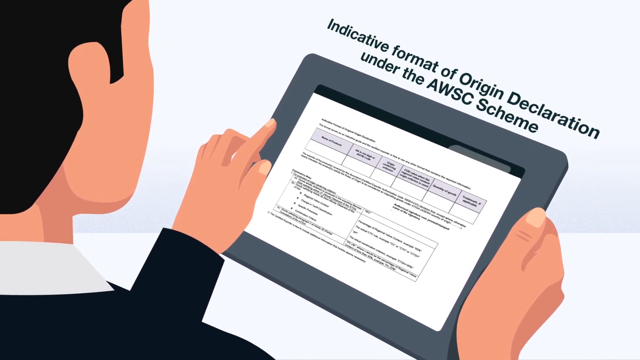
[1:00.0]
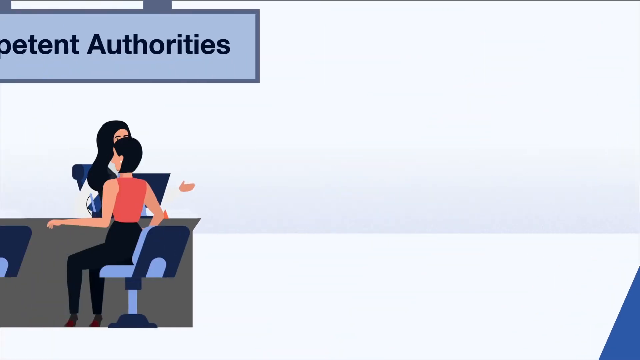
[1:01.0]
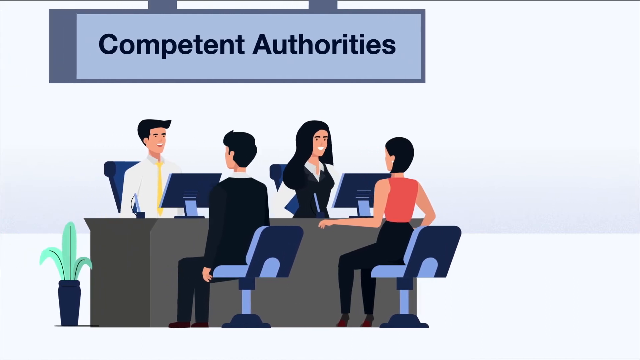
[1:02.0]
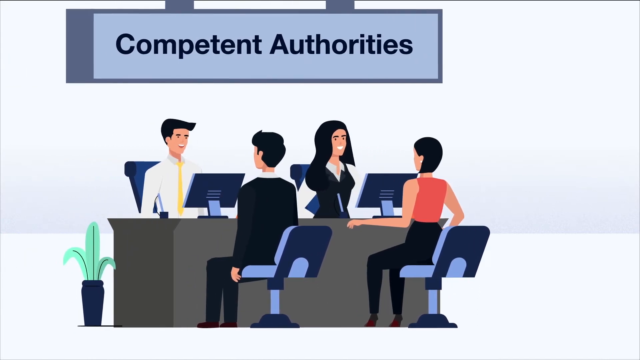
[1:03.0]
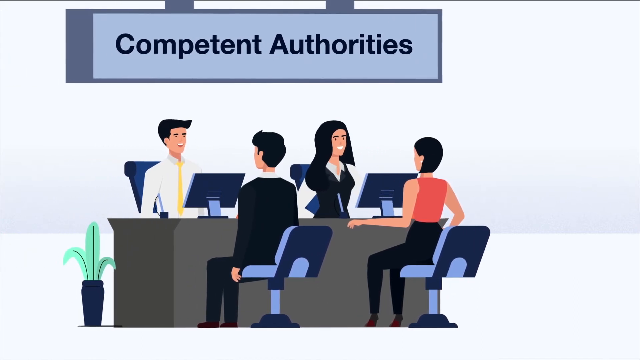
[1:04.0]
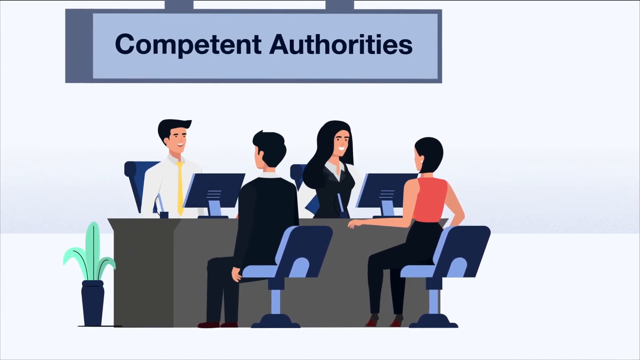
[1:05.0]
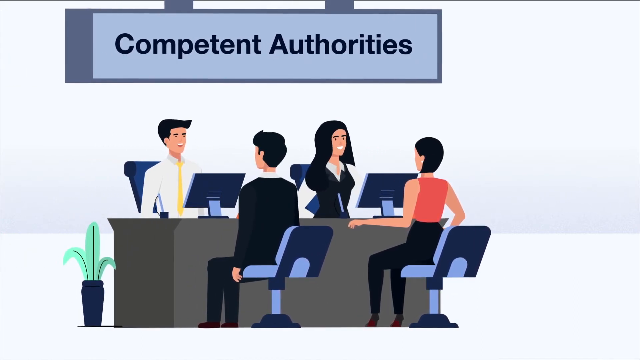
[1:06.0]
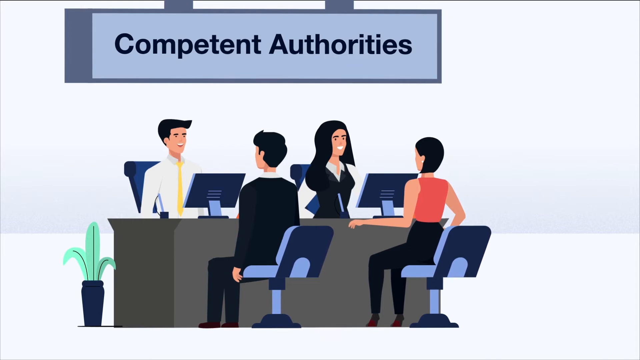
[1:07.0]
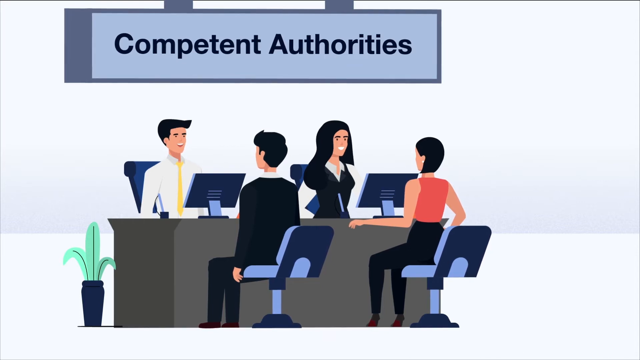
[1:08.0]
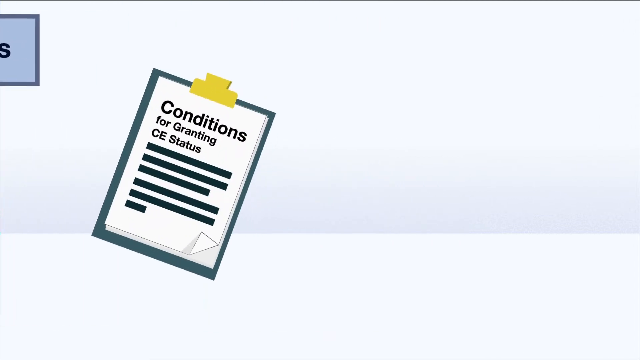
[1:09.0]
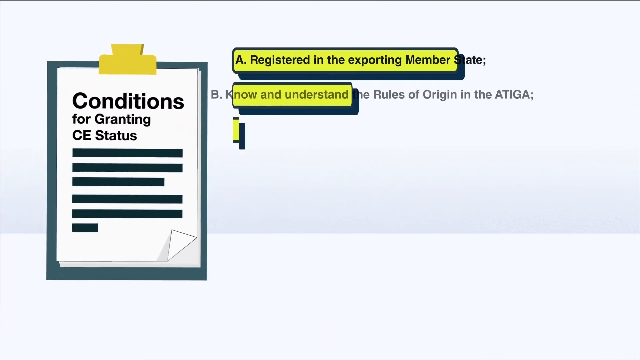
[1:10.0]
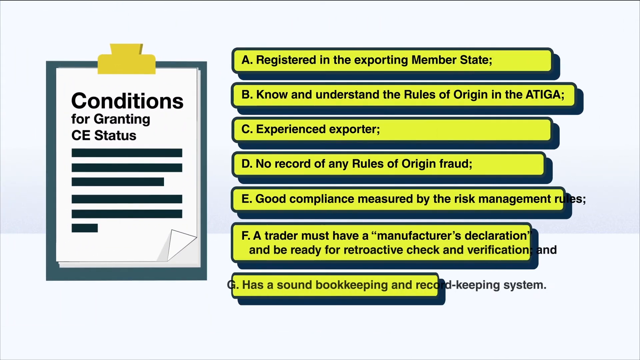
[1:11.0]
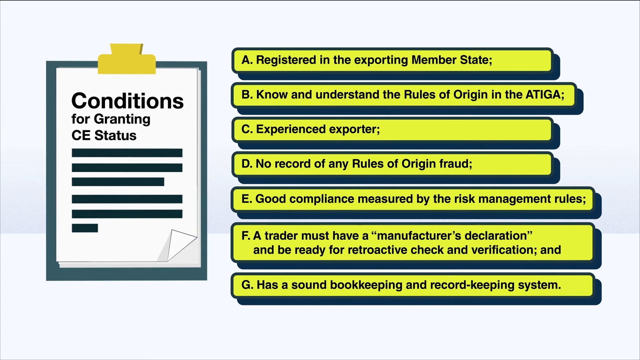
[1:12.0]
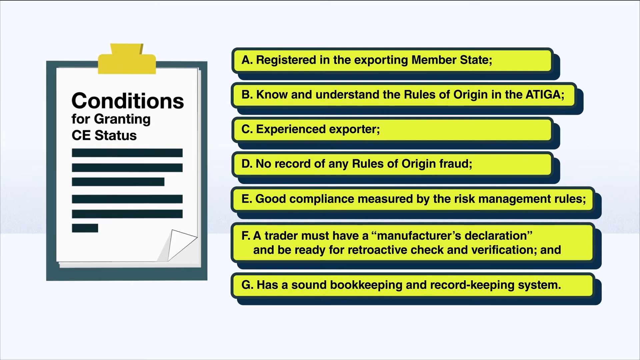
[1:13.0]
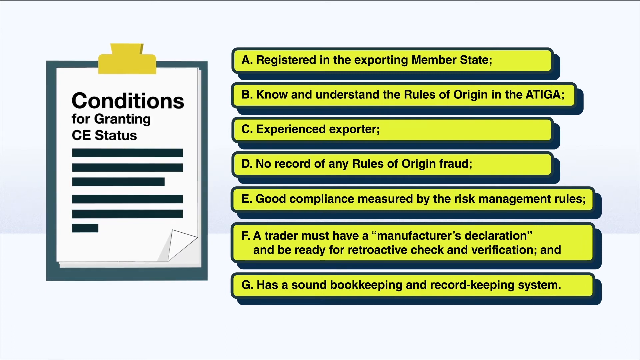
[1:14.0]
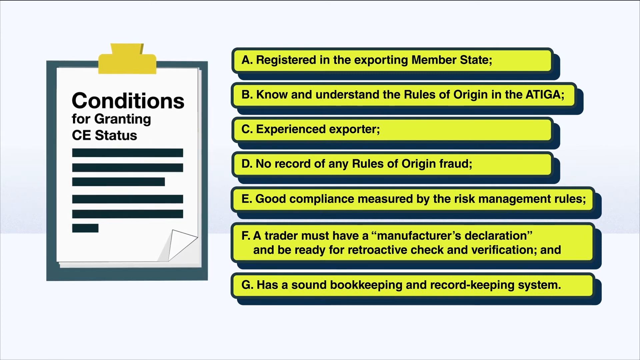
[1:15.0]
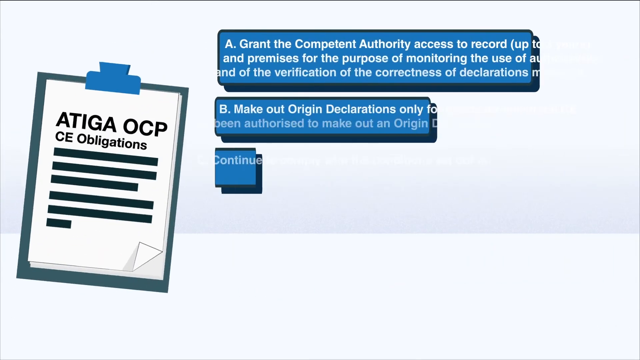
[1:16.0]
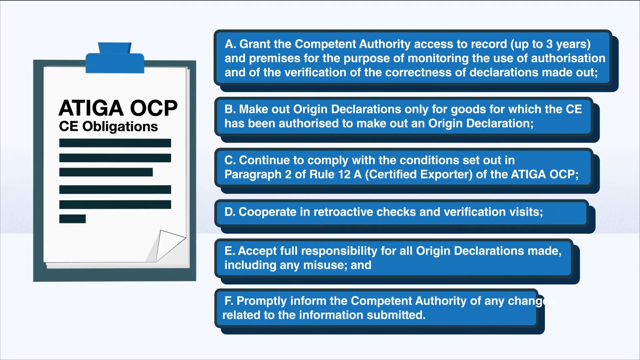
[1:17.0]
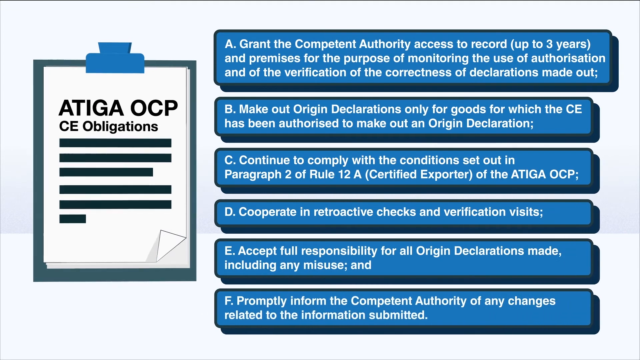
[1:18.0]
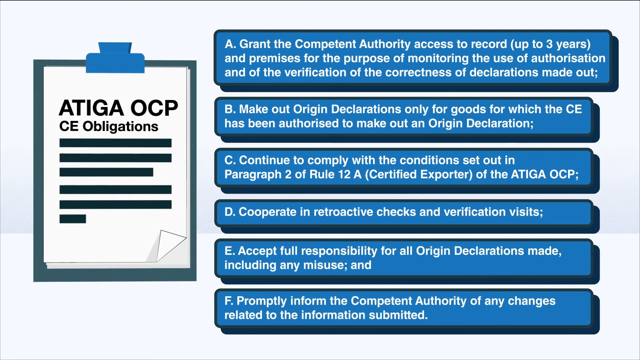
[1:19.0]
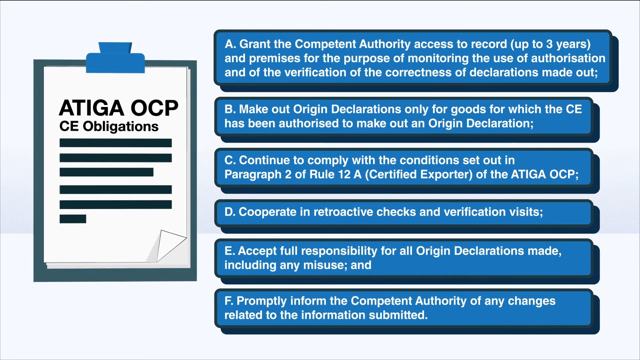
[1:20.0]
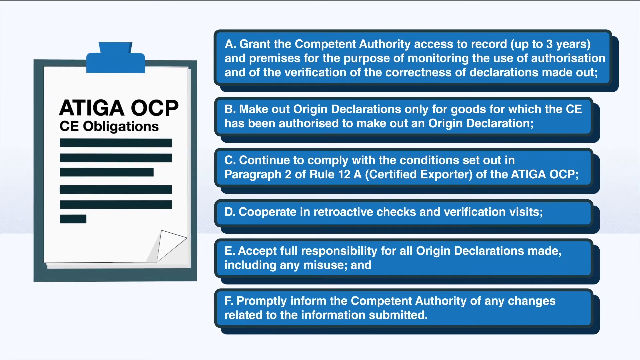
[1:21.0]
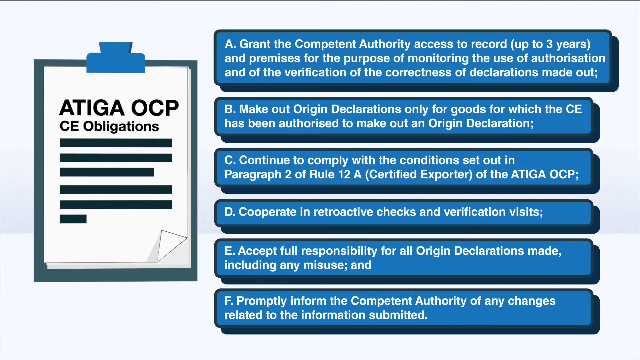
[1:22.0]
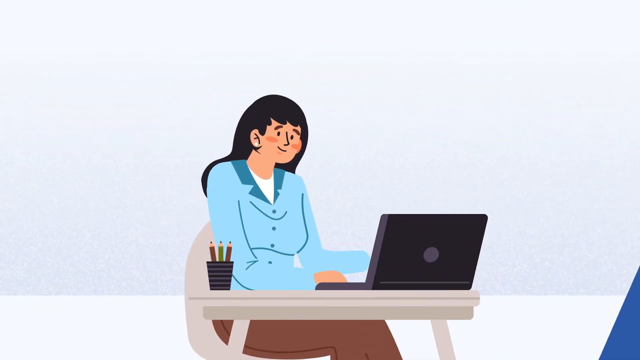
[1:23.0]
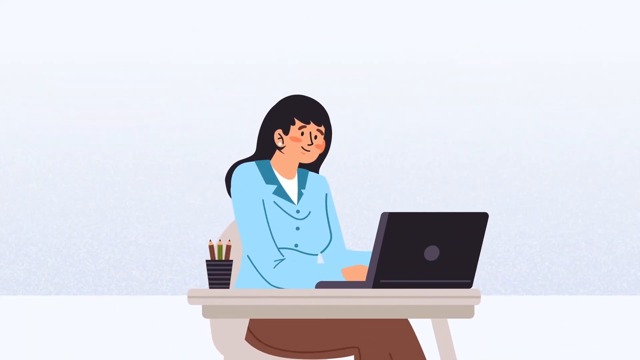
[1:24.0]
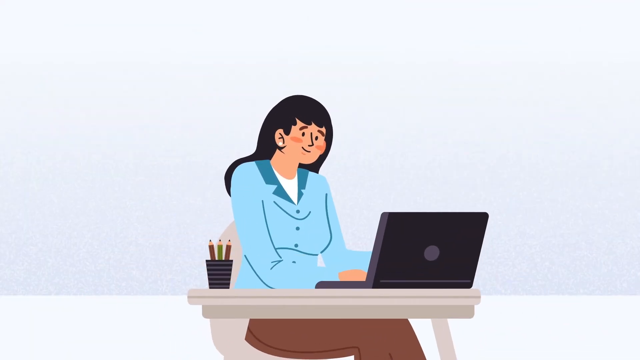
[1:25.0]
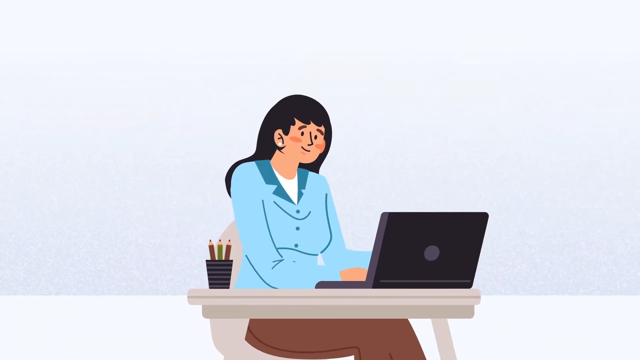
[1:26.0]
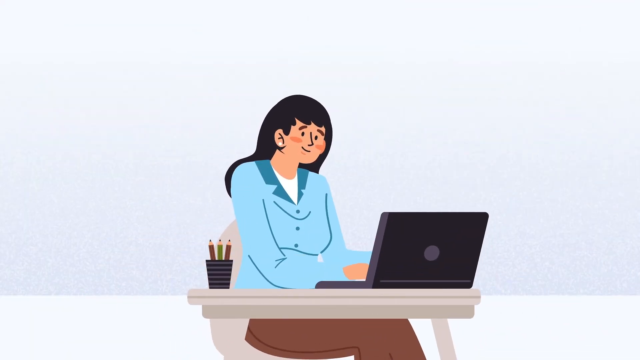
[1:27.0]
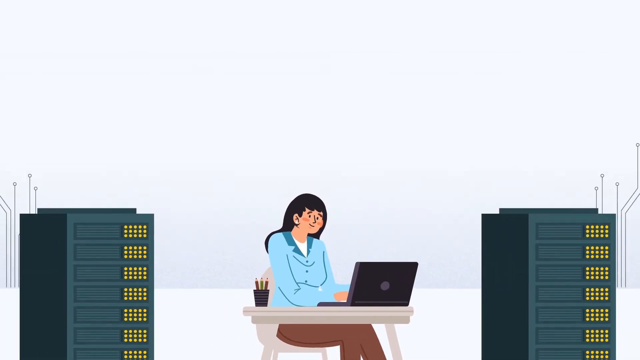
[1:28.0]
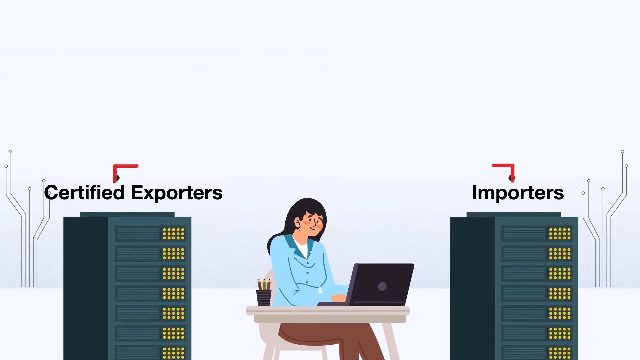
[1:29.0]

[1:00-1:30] The man is still on the same form on his tablet screen, then the scene transitions to two executives serving two clients, under a sign that reads "Competent Authorities". The executive on the left wears a white shirt and a yellow tie; the one on the right is a woman with long black hair, a black bag and a white long-sleeved shirt. The two clients are sitting in front of them at the table: on the left a man with black hair in a black suit, and on the right a woman with short black hair in a sleeveless red blouse. Next, a board titled "Conditions for Granting CE Status" appears, listing seven items from A to G, each saying something different, such as "in the Exporting Member State", "Know and understand the rules of origin in the ATIGA", "Experienced exporter" and "No record of any rules of origin fraud", among others. Then another board appears that reads "ATIGA OCP, CE Obligations", with another pair of items on a blue background.